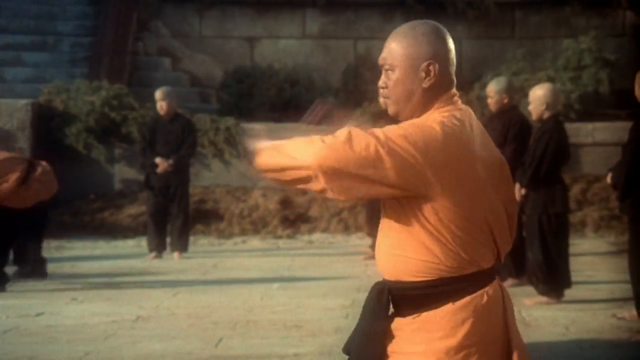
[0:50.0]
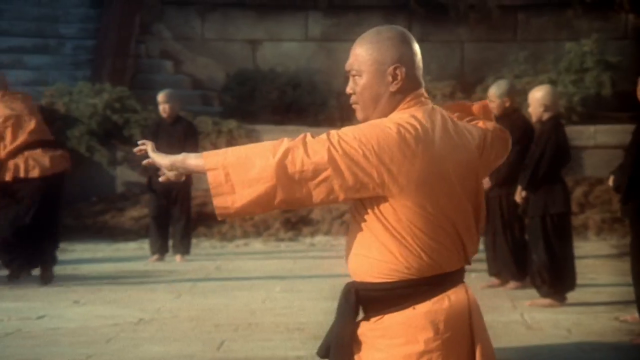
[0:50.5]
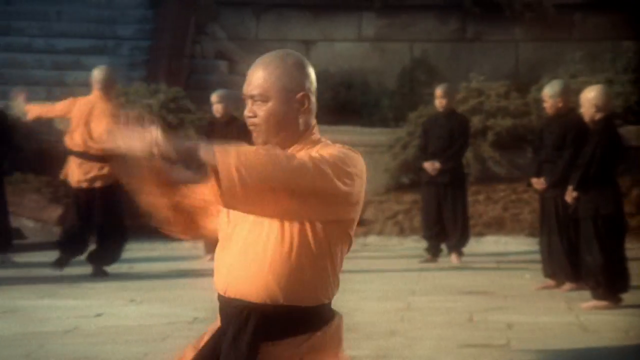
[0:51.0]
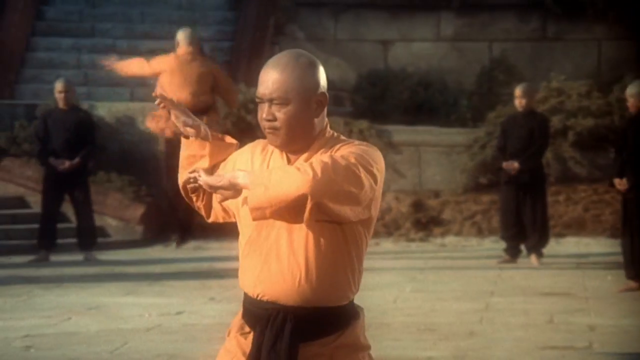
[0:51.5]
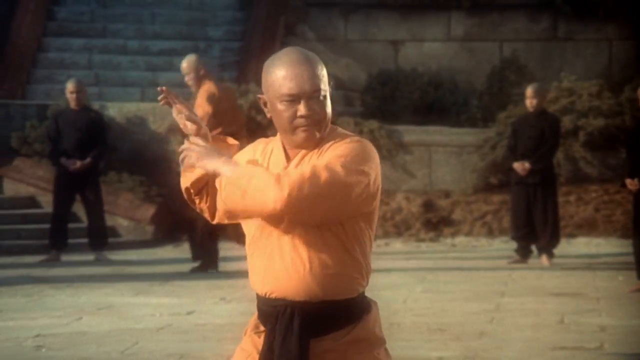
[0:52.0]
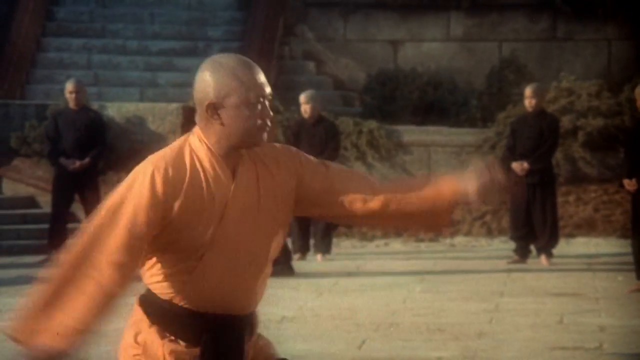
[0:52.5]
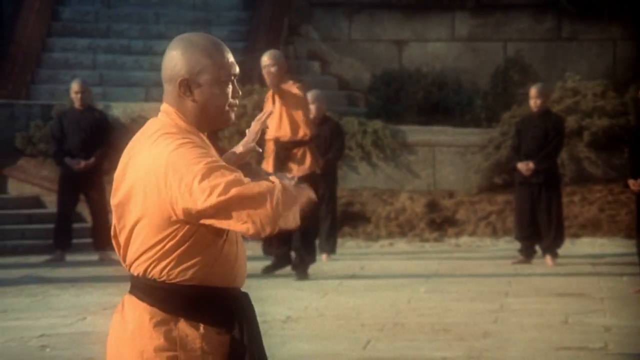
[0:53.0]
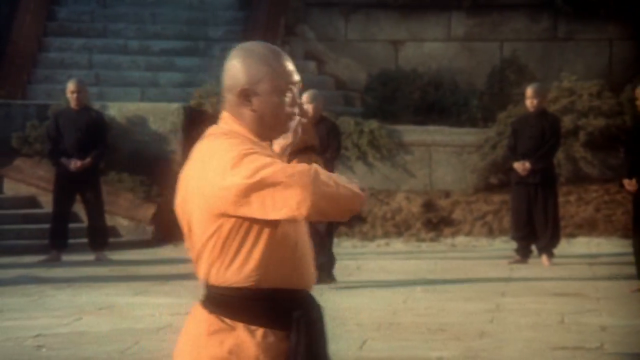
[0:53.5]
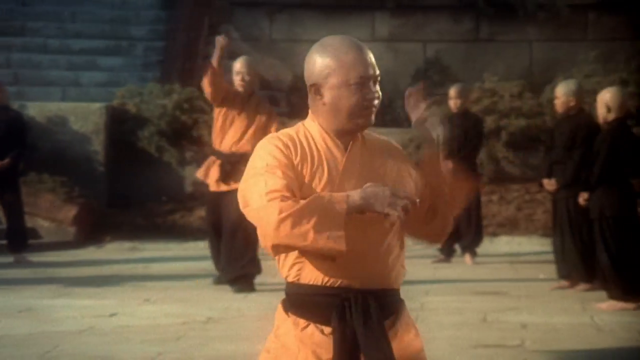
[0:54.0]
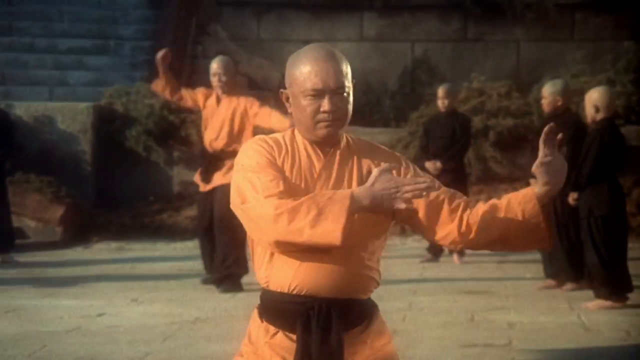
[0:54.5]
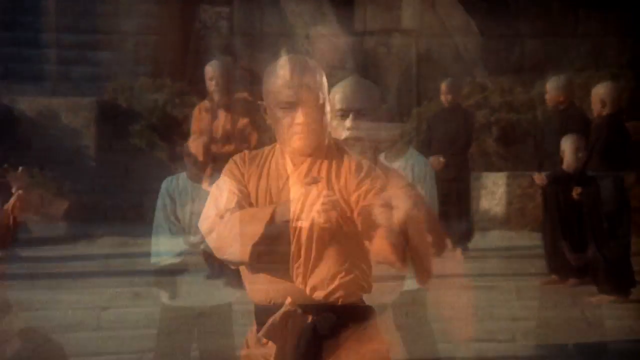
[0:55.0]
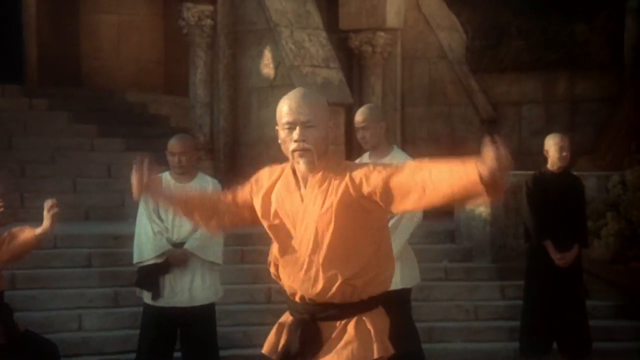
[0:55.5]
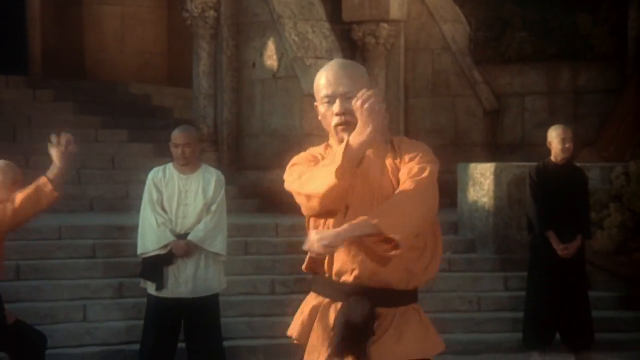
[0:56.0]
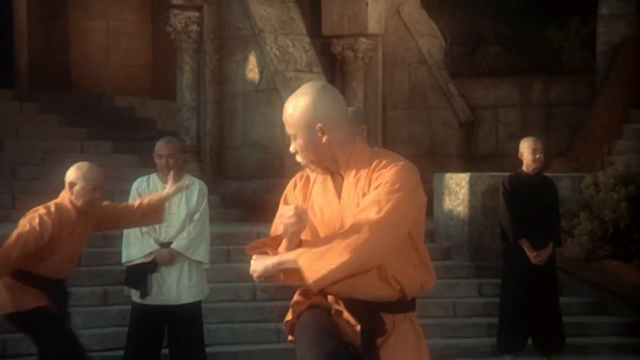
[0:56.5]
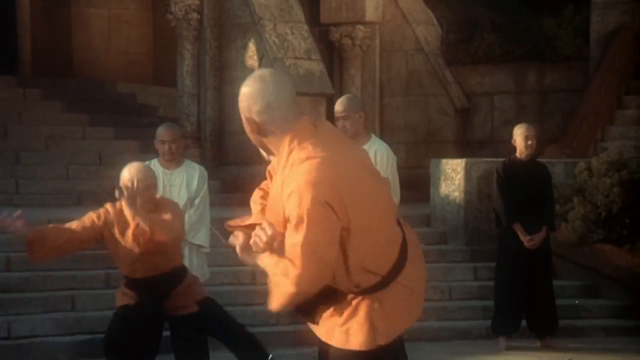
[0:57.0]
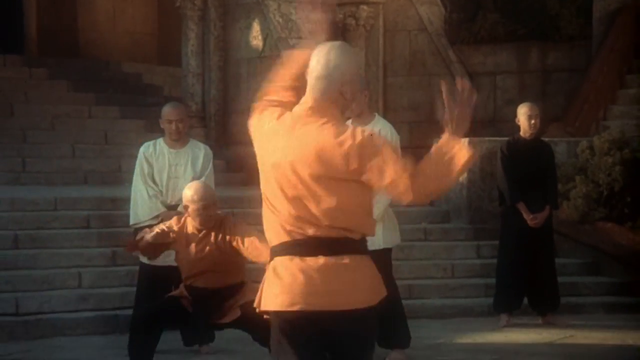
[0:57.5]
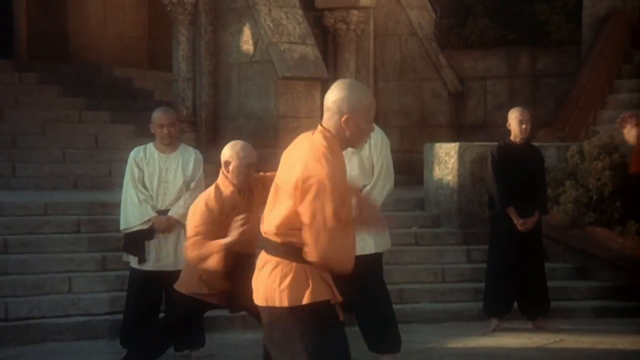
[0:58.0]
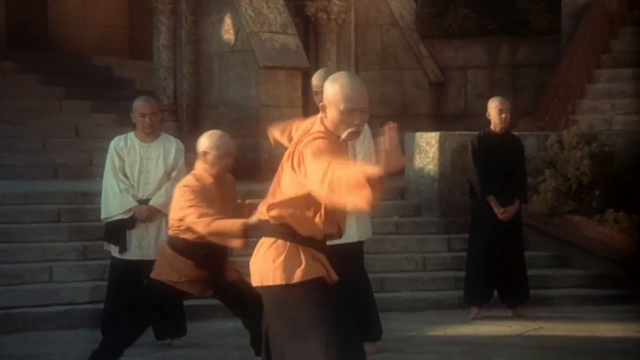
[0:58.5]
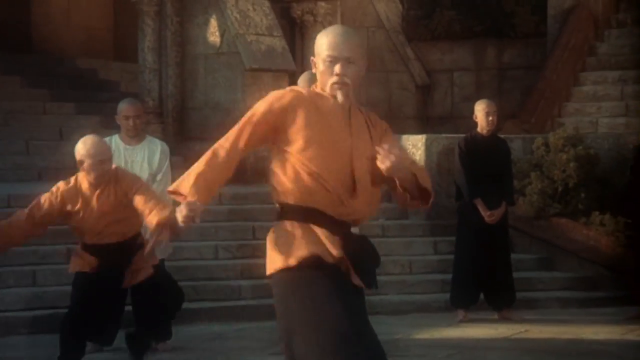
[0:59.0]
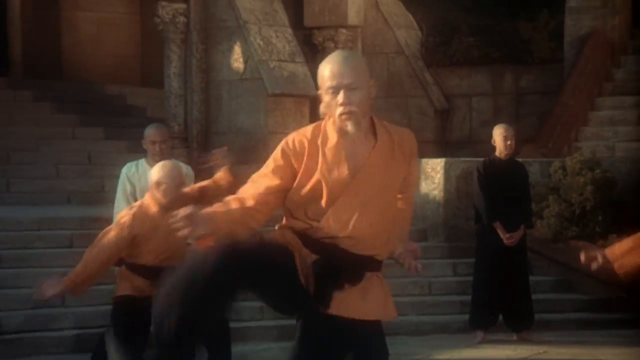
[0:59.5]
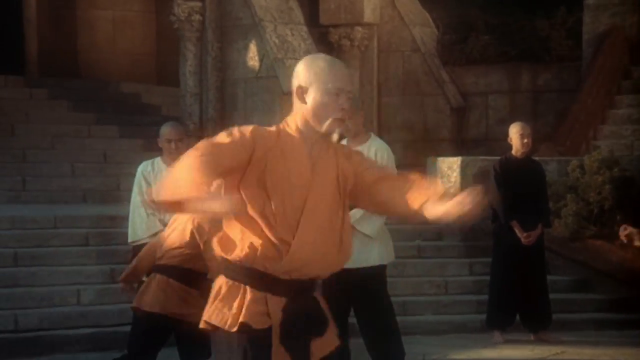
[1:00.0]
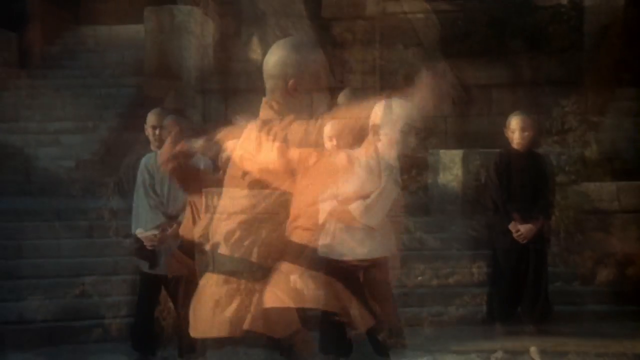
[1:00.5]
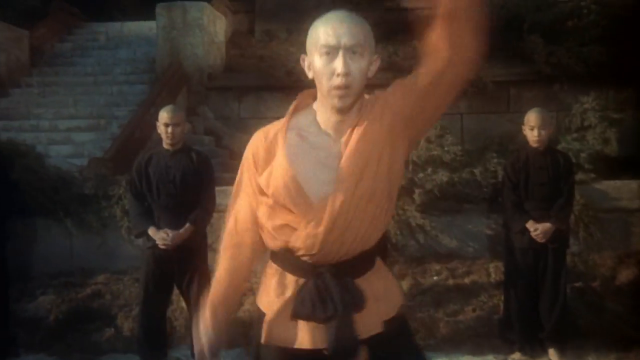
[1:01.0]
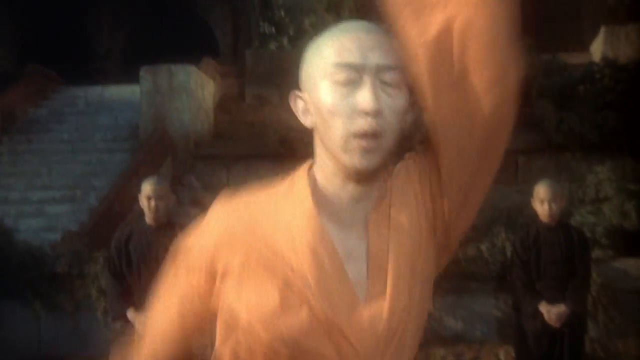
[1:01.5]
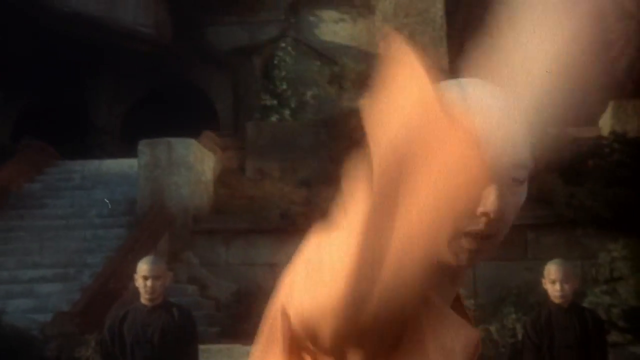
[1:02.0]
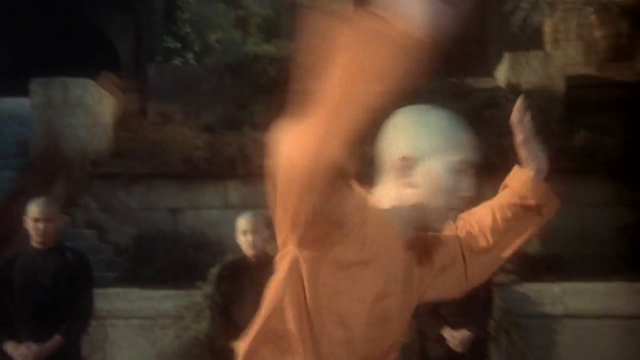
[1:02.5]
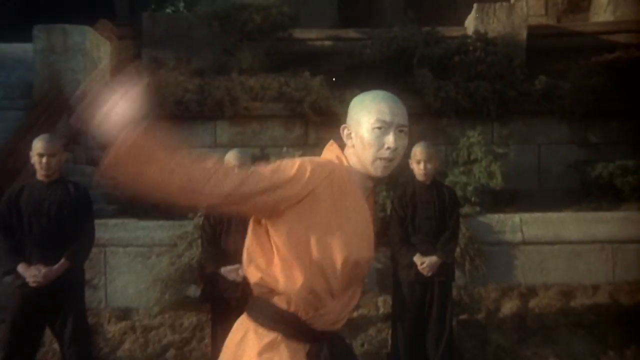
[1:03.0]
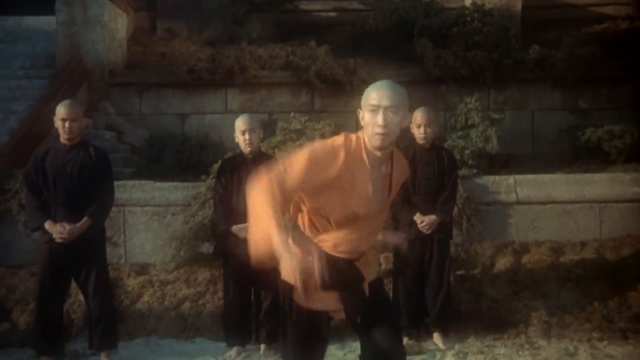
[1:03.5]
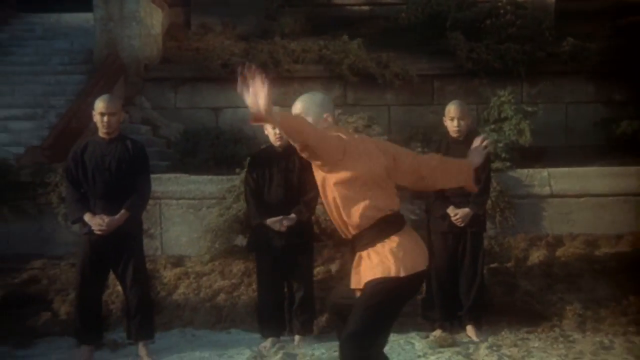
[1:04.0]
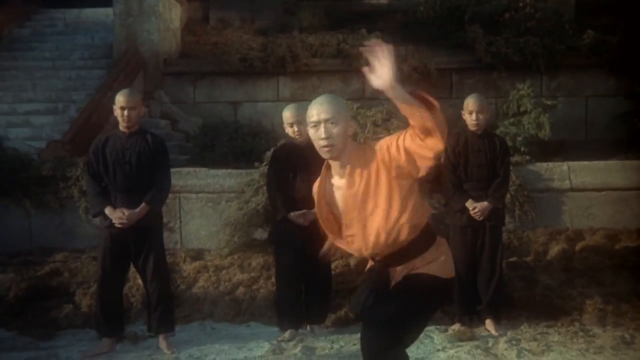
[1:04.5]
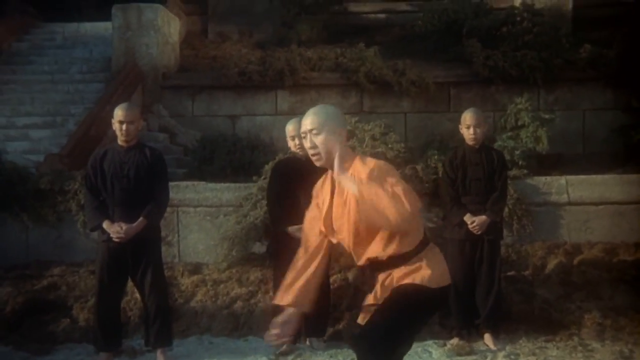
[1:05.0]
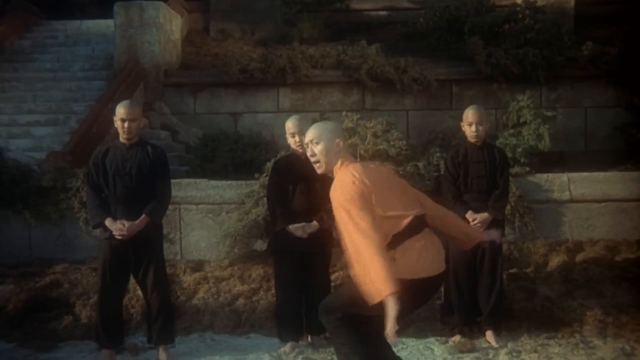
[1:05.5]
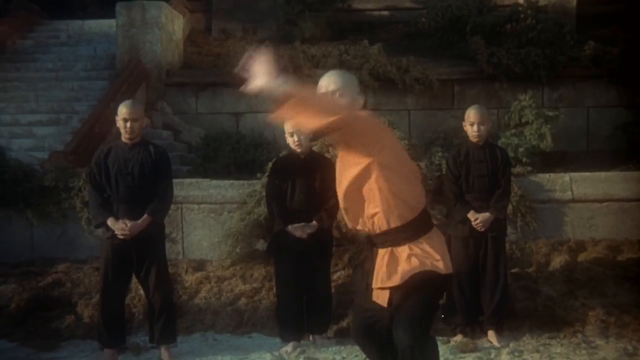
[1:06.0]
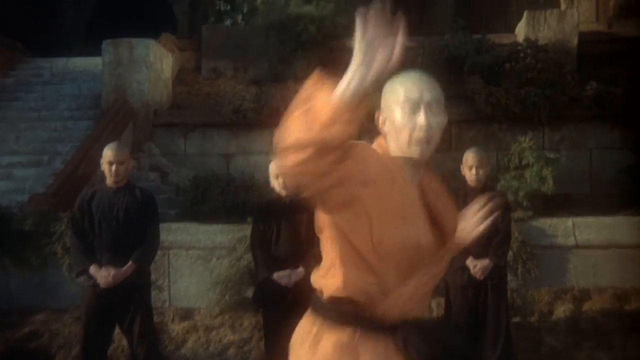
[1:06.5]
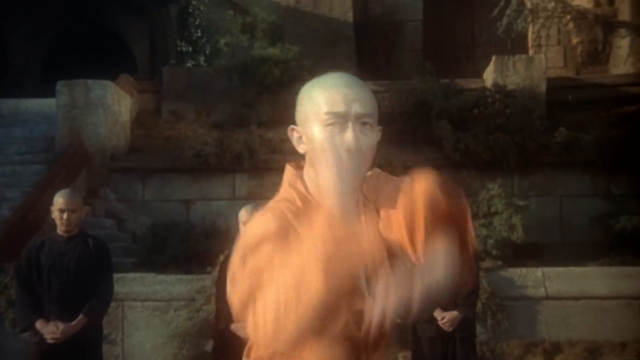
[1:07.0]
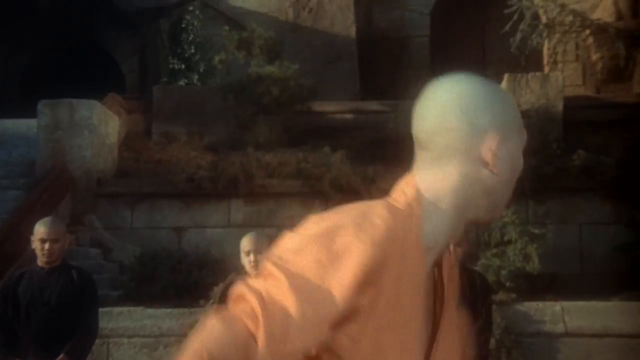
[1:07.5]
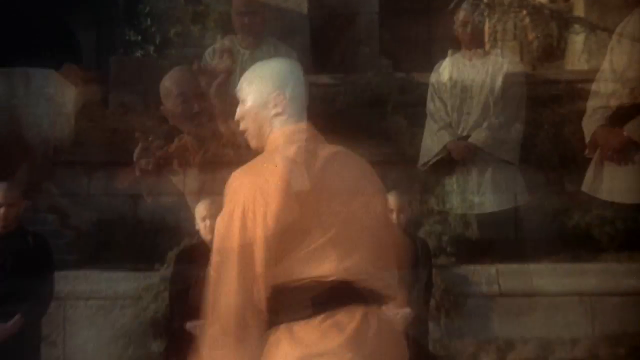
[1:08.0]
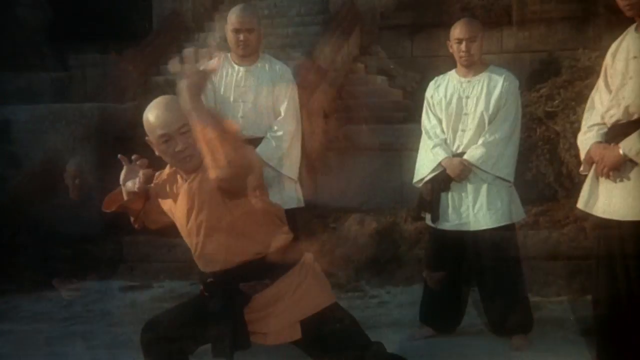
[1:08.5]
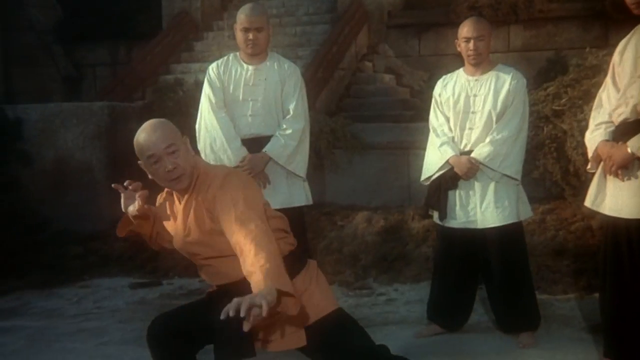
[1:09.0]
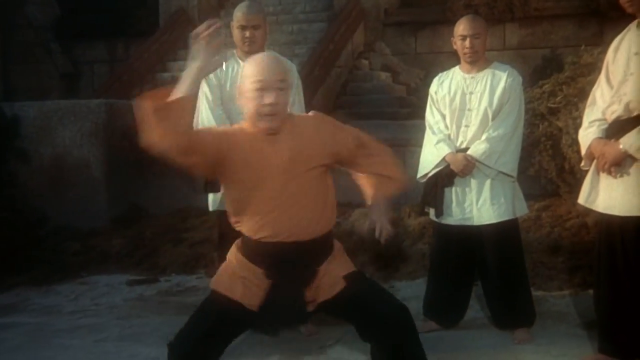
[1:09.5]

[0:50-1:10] Shaolin monks in orange suits do many moves, practicing and warming up their bodies. Some monks in black suits are in the background; they seem younger. Everyone has a bald head. The monks do fighting moves and meditation moves, with very expressive faces showing determination and maybe discipline. They move from left to right and right to left, and others continue their moves in the background. Other monks wear white suits and black suits. The monks in orange wear black belts as they train. The camera focuses on their faces and on their moves: their hands go from left to right at their sides, toward their backs, then up and down around their bodies. They strike the air, appear to make noises with their mouths, and make peculiar movements with their fingers, imitating nails.